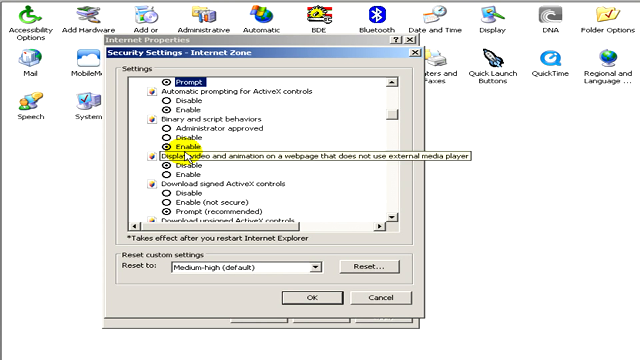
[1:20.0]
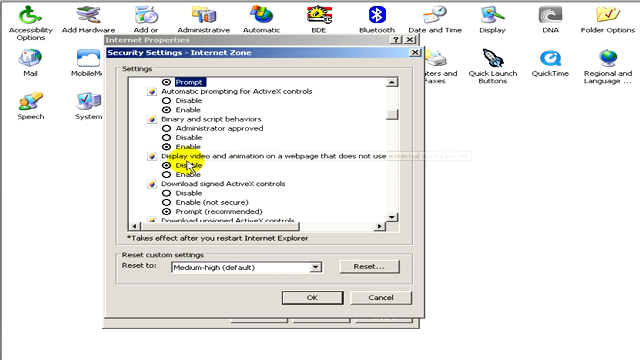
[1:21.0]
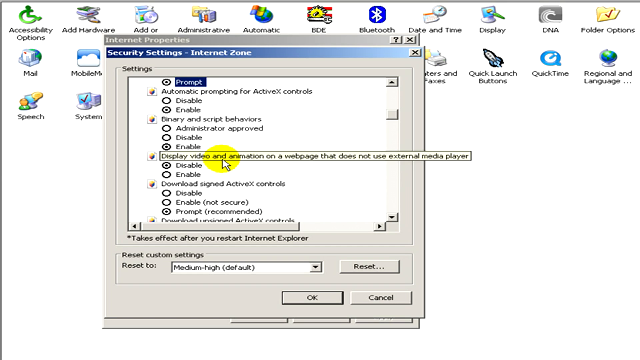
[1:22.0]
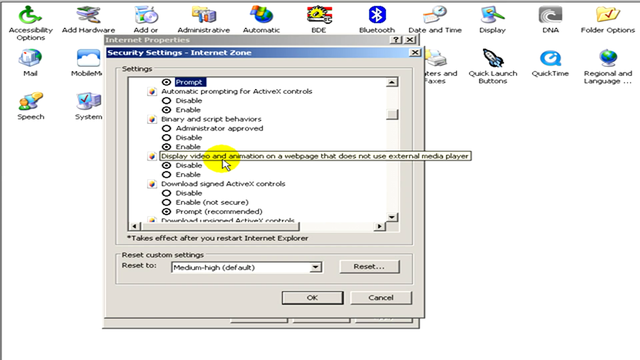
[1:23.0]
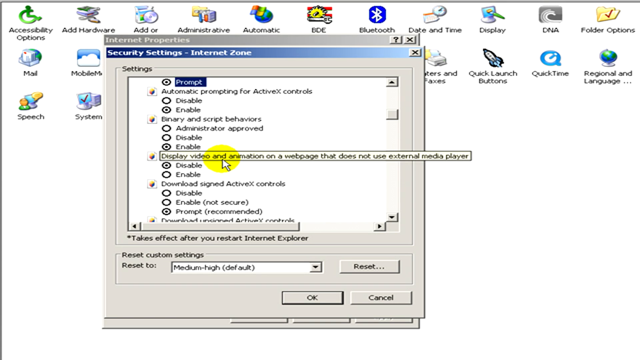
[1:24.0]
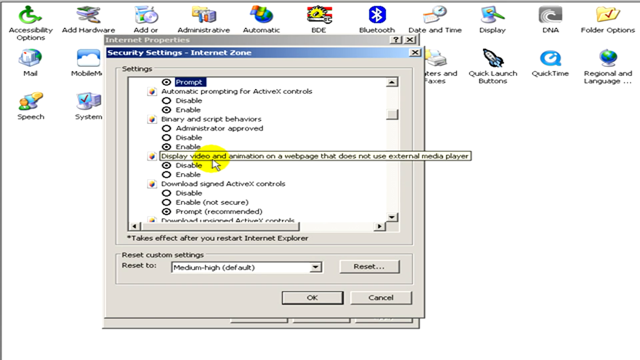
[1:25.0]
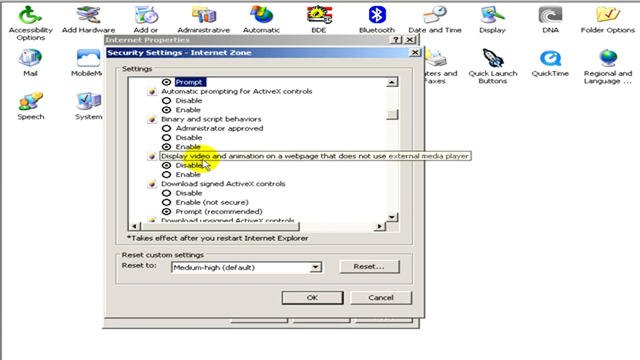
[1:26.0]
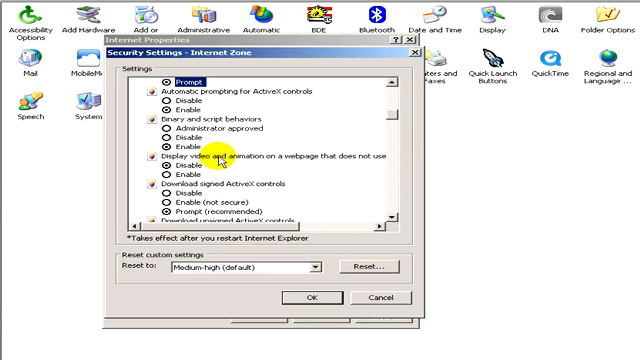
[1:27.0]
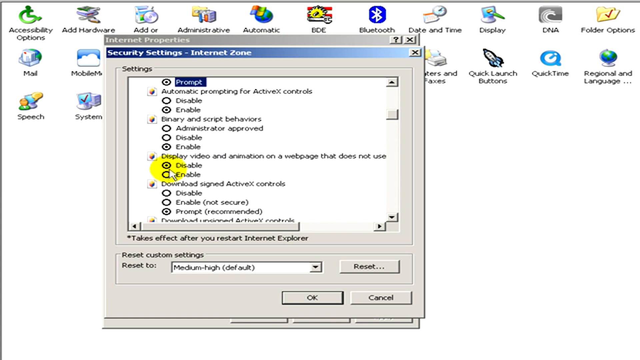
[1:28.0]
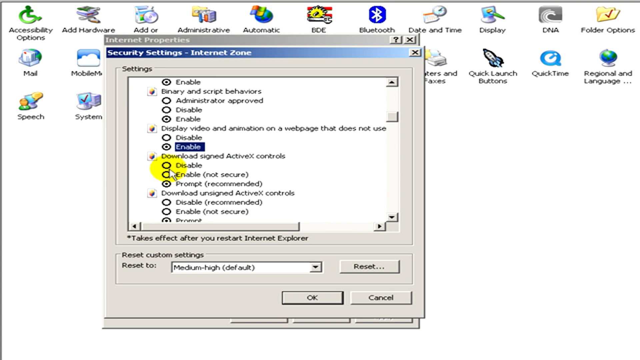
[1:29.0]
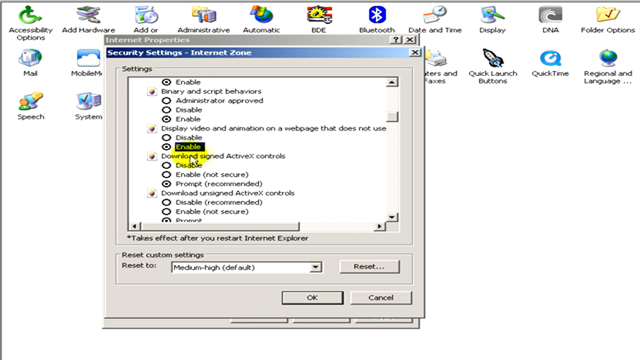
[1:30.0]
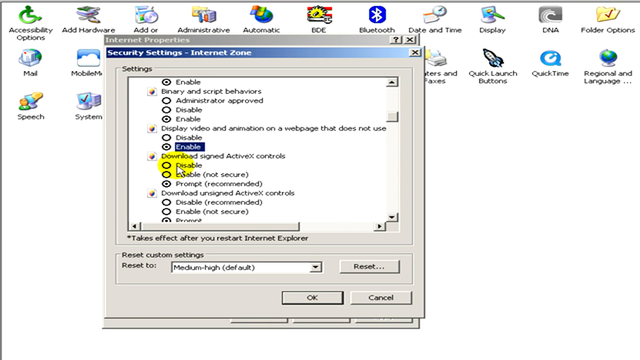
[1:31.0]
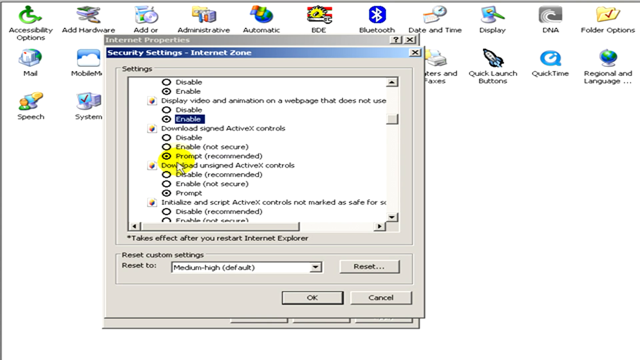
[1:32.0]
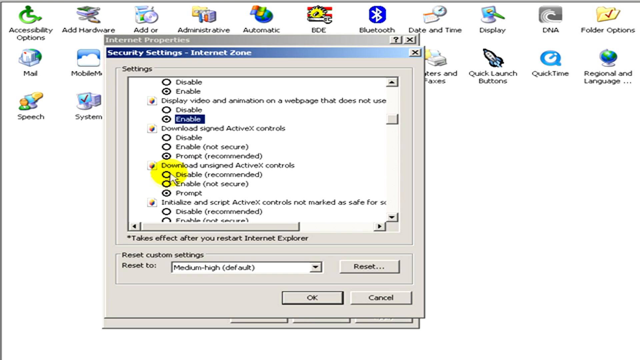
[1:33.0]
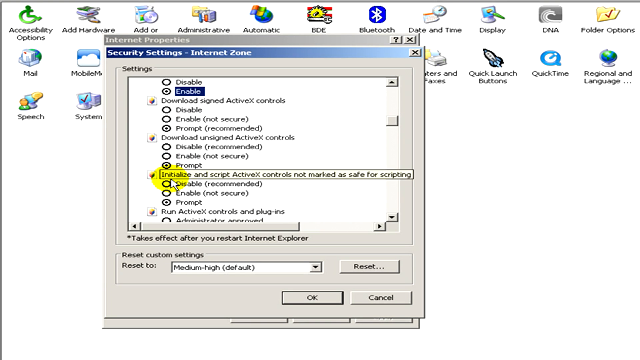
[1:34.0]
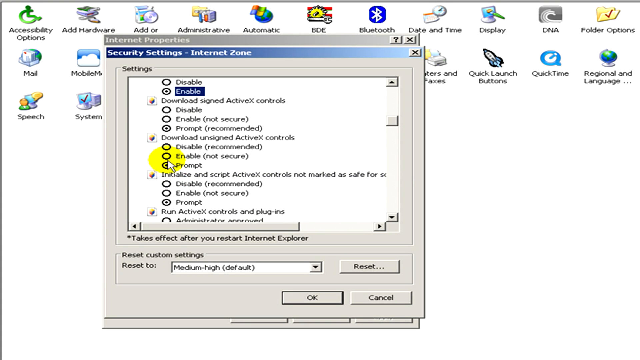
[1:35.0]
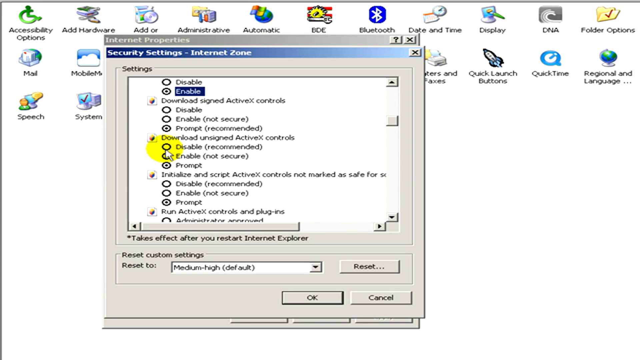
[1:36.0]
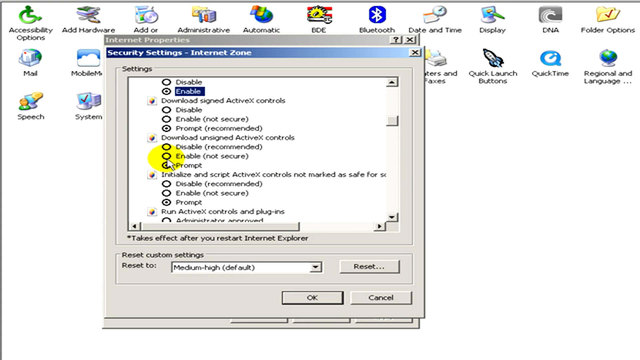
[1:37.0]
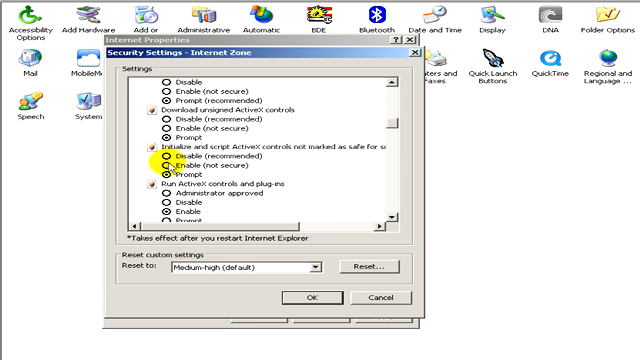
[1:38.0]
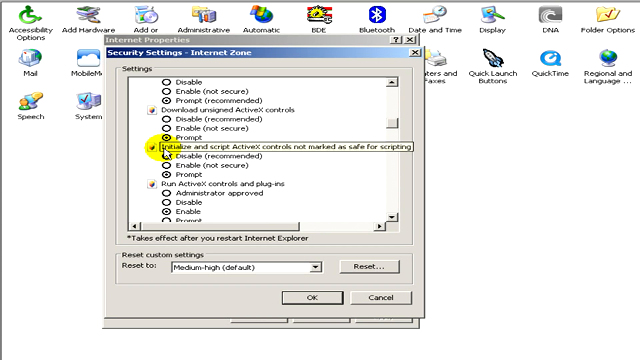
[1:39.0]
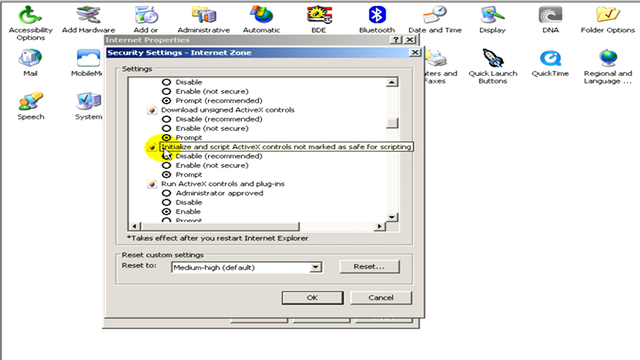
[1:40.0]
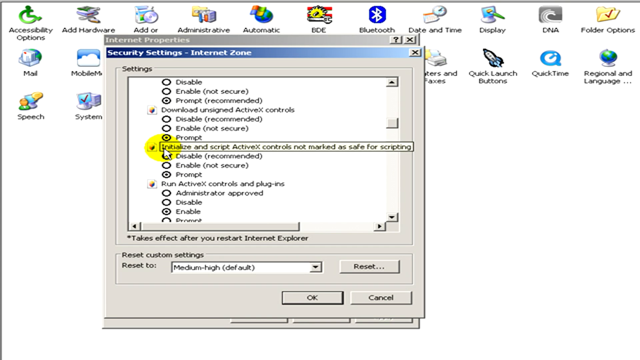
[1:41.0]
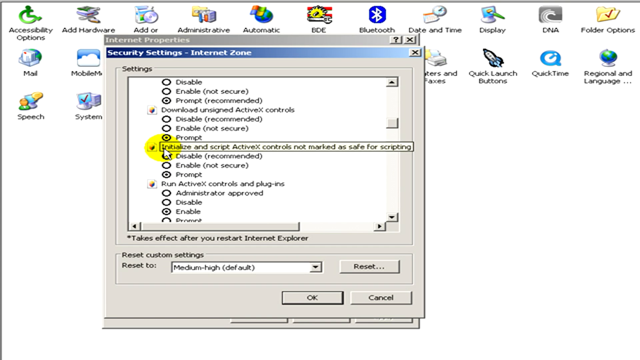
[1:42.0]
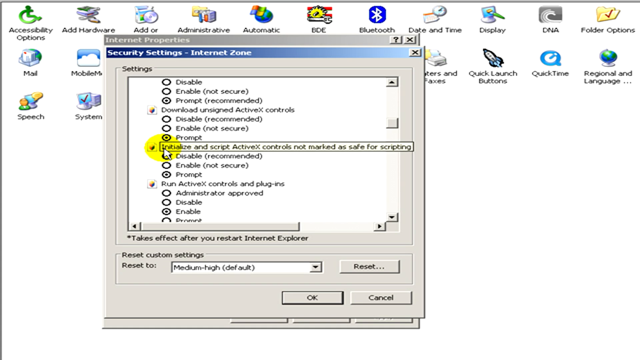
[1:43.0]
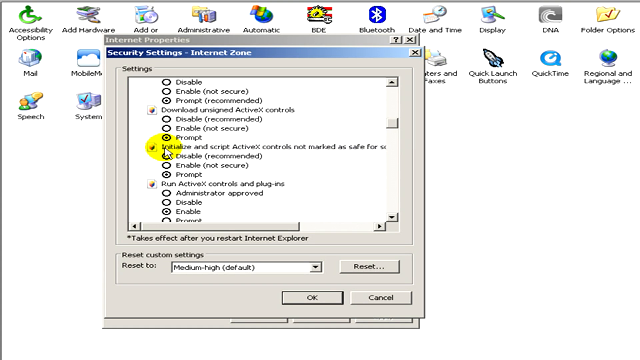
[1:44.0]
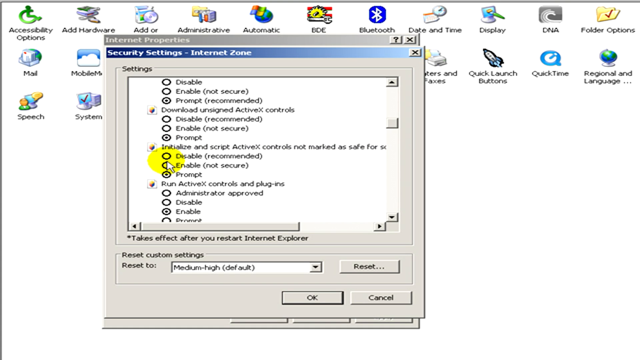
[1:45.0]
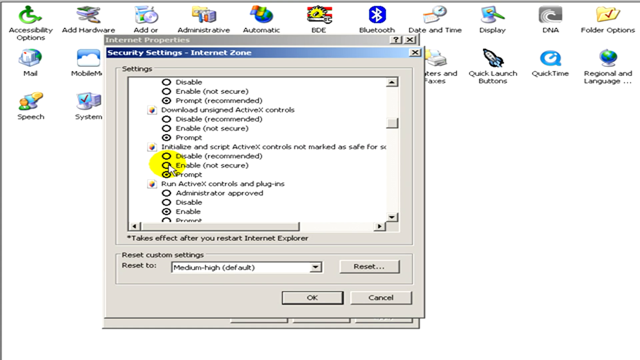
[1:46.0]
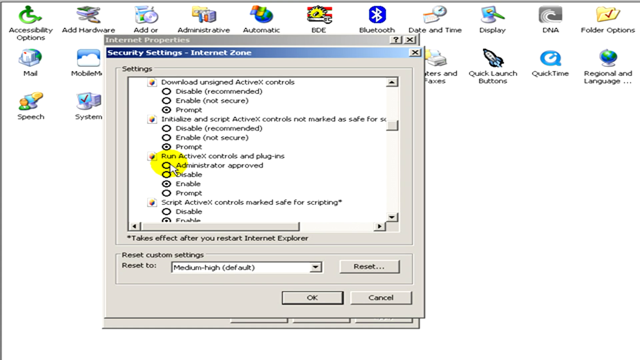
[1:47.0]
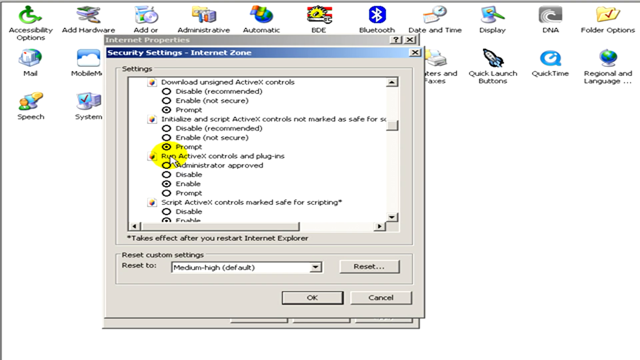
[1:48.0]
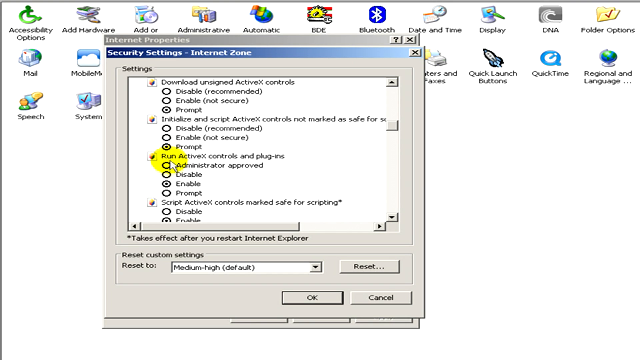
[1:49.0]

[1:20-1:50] In the Internet Zone security settings, the person navigates the options, which include "binary and script behaviors", "display video and animation on a web page that does not use external media player" and "download signed ActiveX controls". Each has options such as disable and enable; "download signed ActiveX controls" has three options: disable, enable and prompt. They change the display video and animation setting to enabled from disabled. Scrolling down reveals more options, such as "download unsigned ActiveX controls" and an option beginning "Initialize". Further down is "run ActiveX controls and plugins", with options including administrator, disable and enable. Below this on the page is "Reset custom settings", currently set to "Reset to medium high default", and OK and Cancel buttons below that.